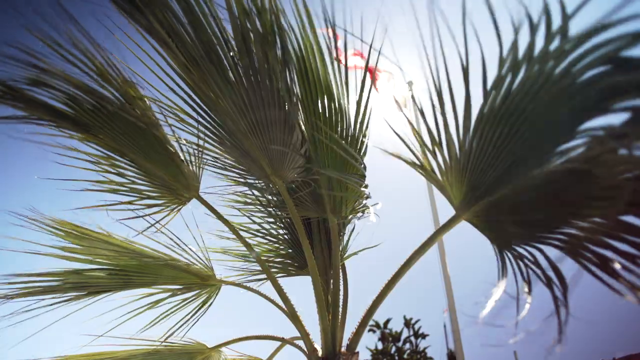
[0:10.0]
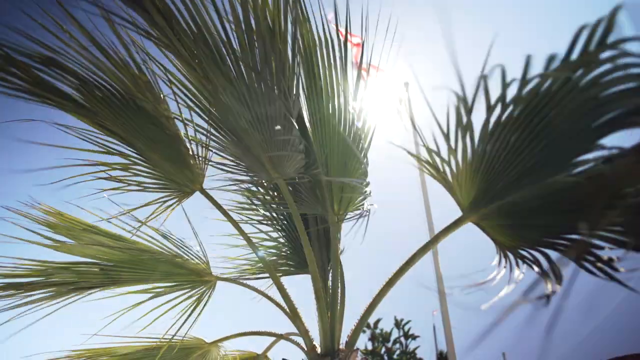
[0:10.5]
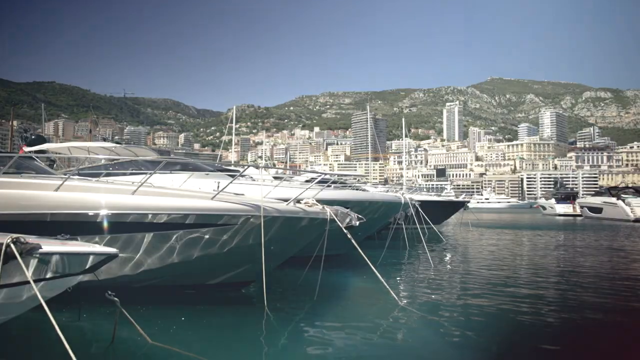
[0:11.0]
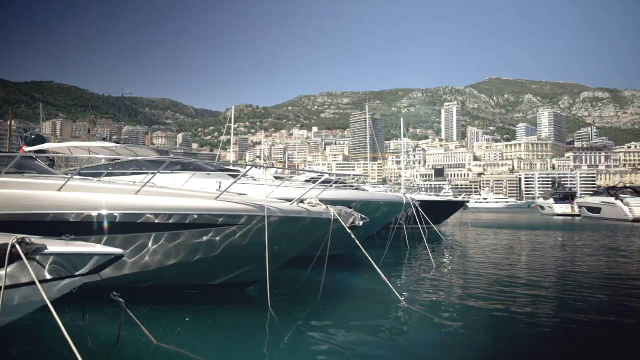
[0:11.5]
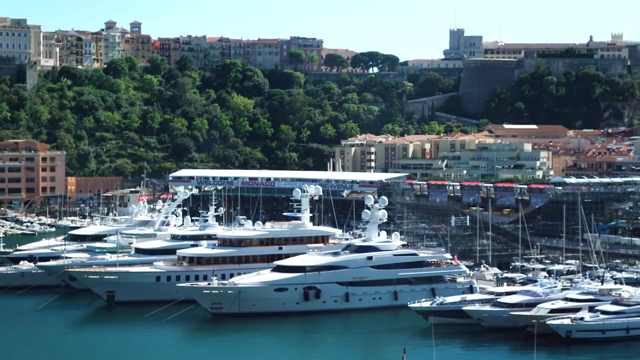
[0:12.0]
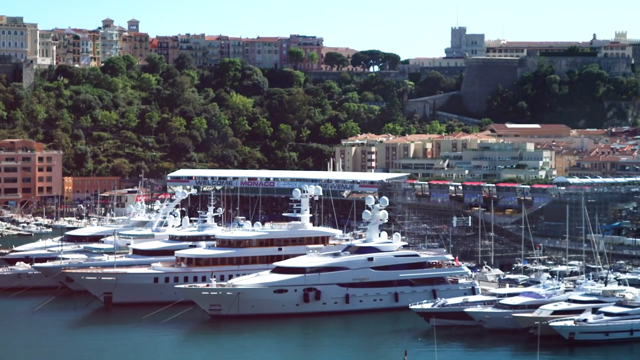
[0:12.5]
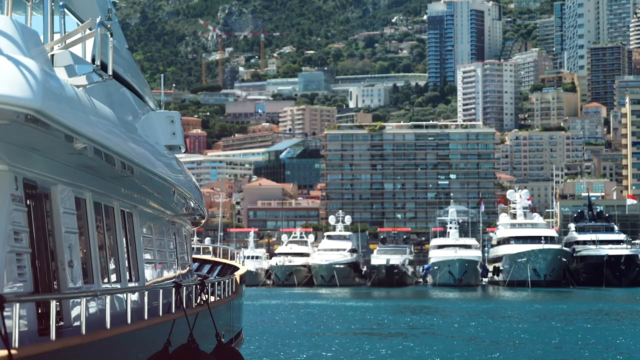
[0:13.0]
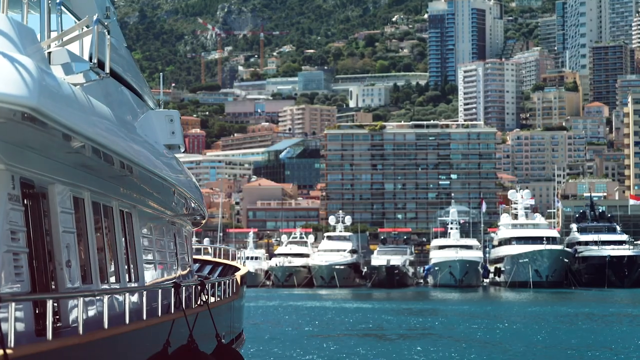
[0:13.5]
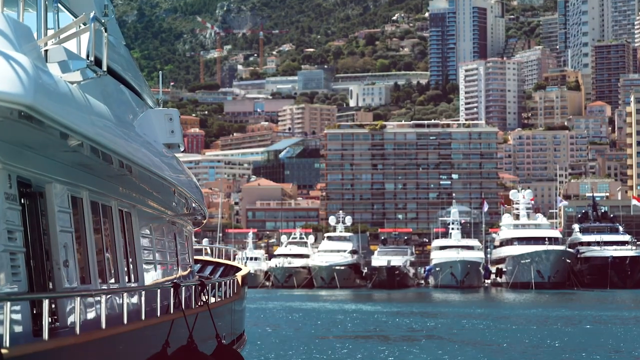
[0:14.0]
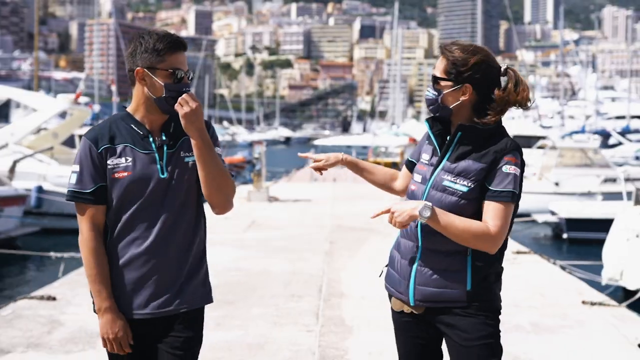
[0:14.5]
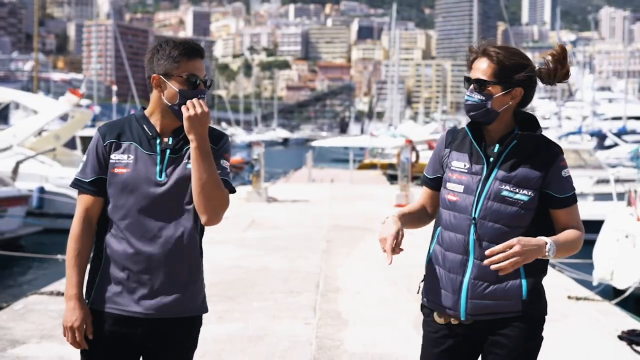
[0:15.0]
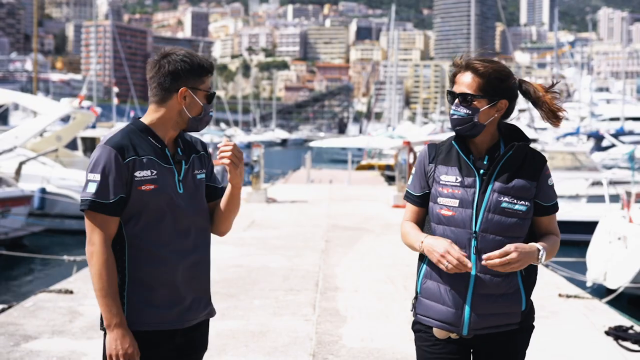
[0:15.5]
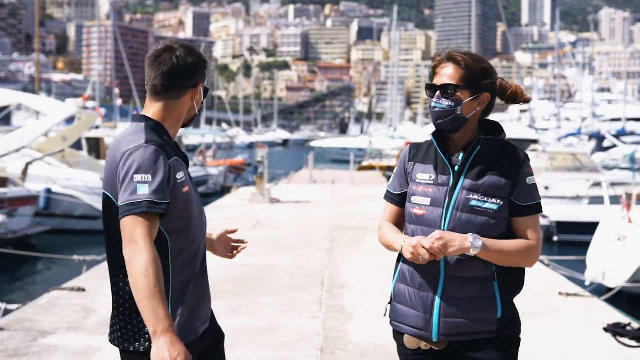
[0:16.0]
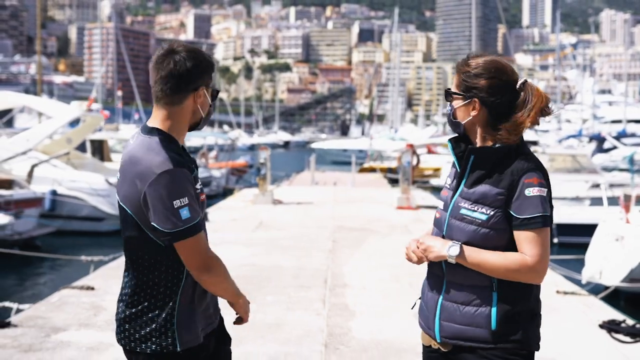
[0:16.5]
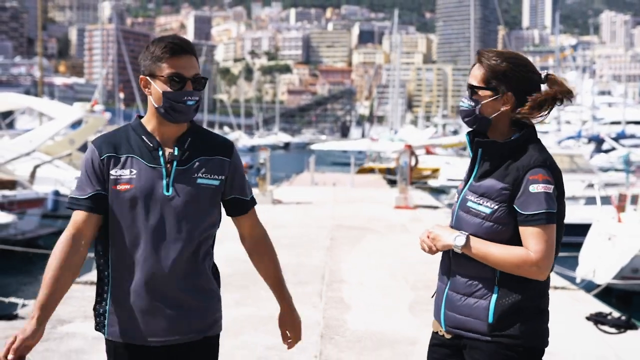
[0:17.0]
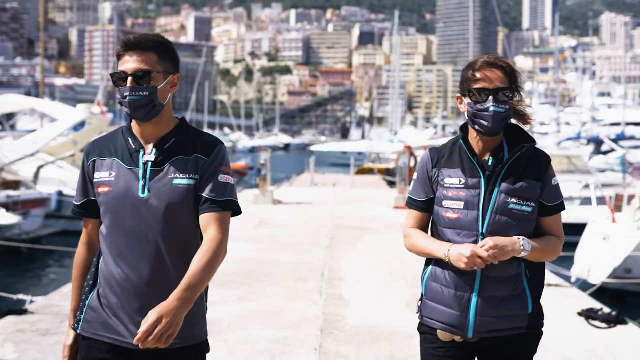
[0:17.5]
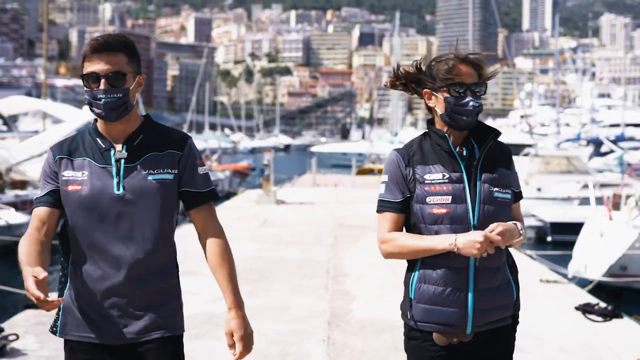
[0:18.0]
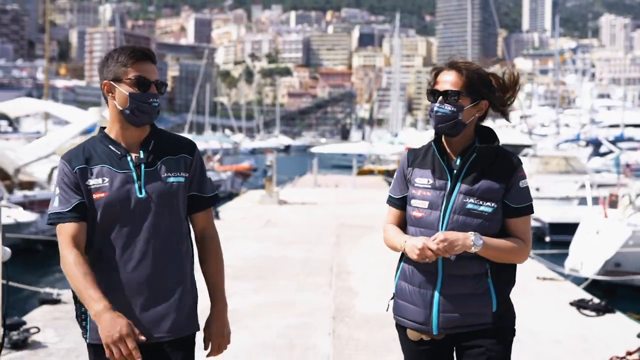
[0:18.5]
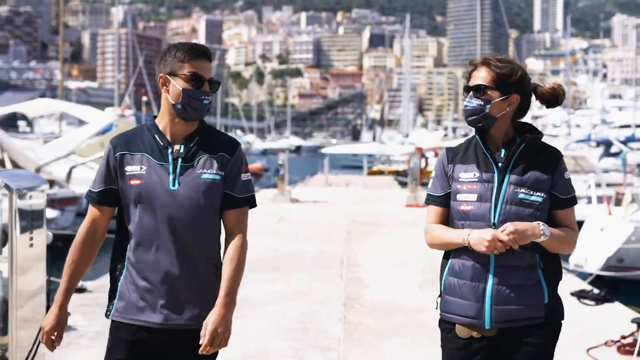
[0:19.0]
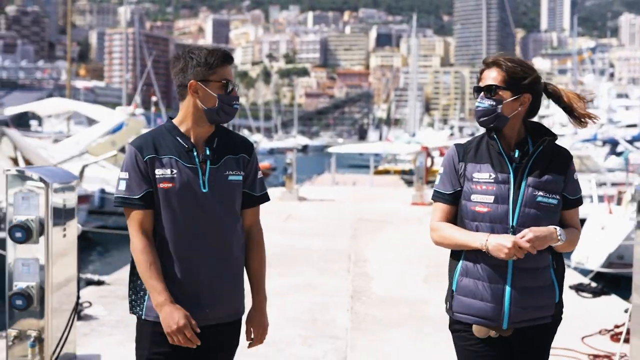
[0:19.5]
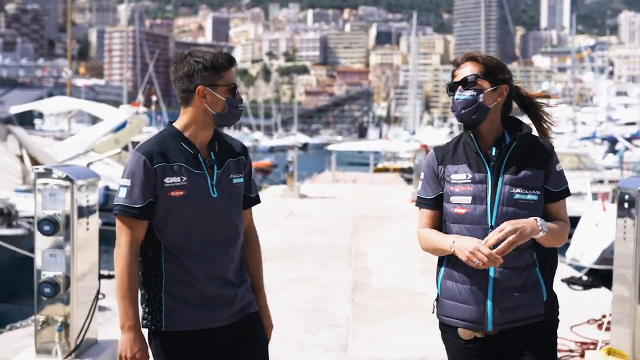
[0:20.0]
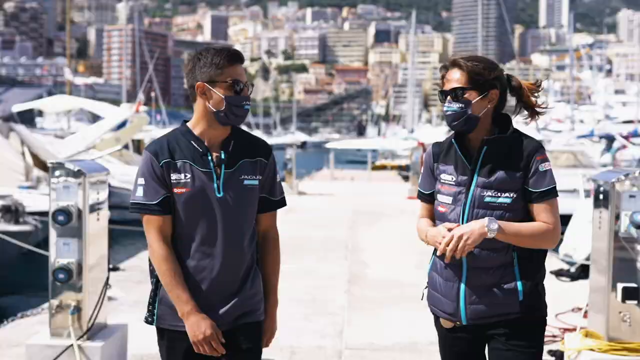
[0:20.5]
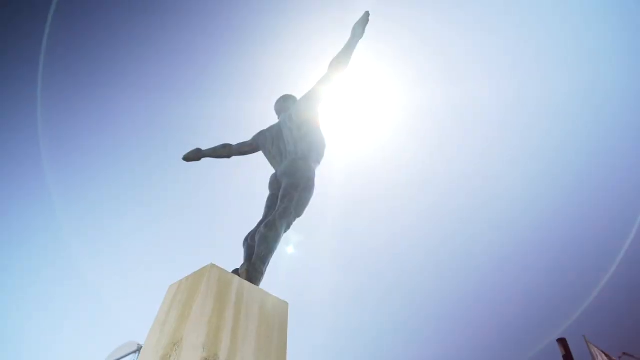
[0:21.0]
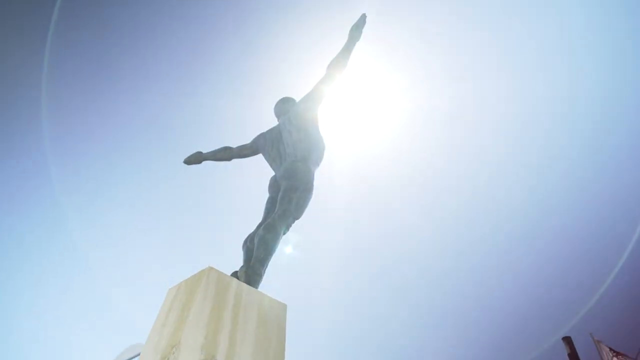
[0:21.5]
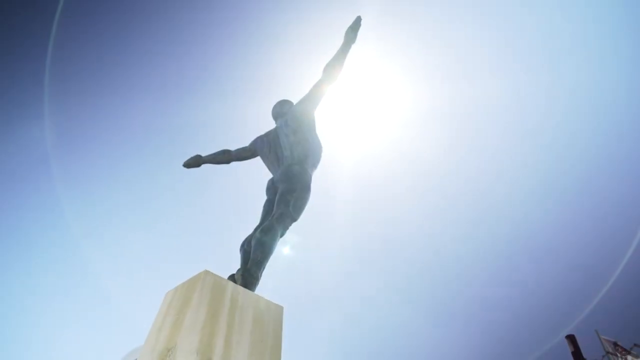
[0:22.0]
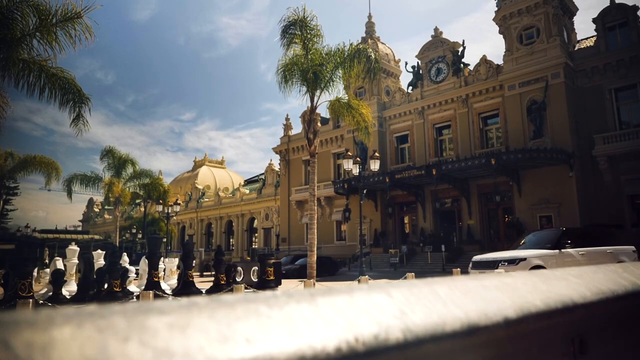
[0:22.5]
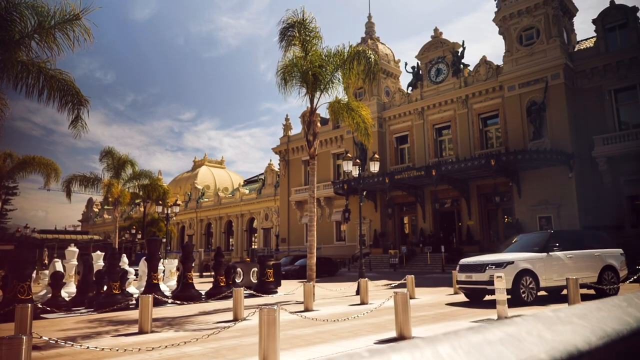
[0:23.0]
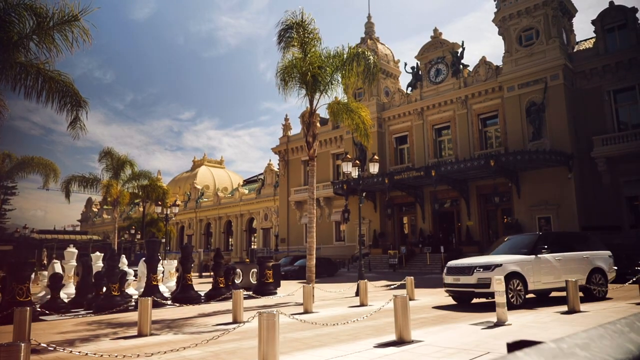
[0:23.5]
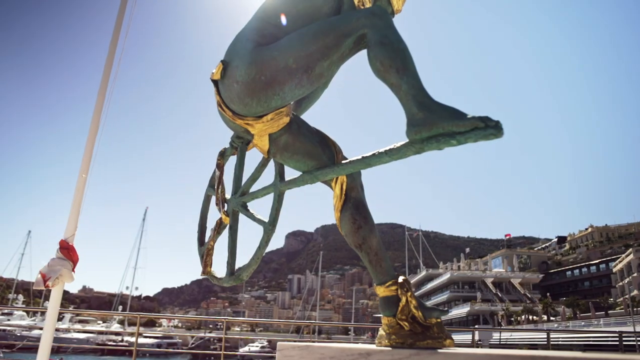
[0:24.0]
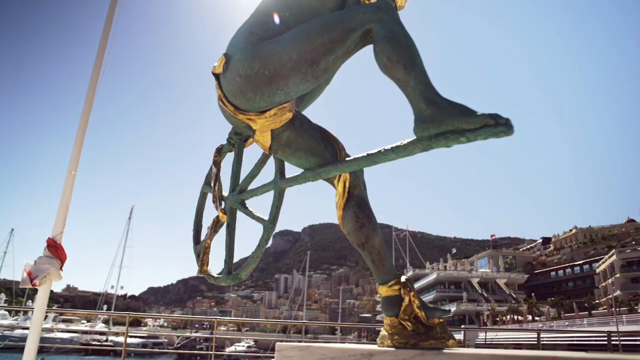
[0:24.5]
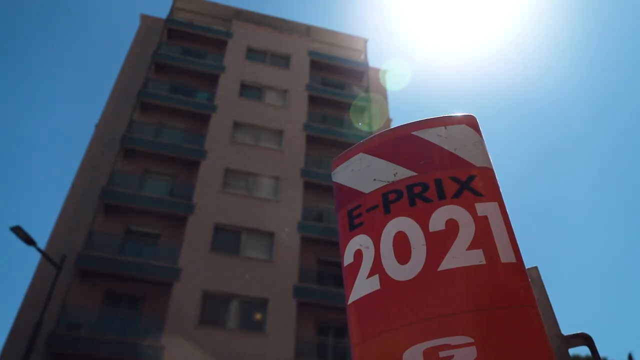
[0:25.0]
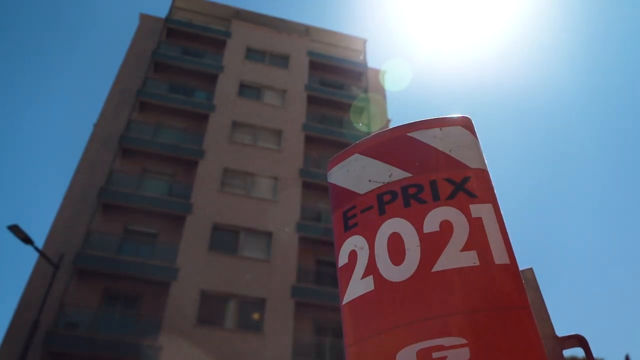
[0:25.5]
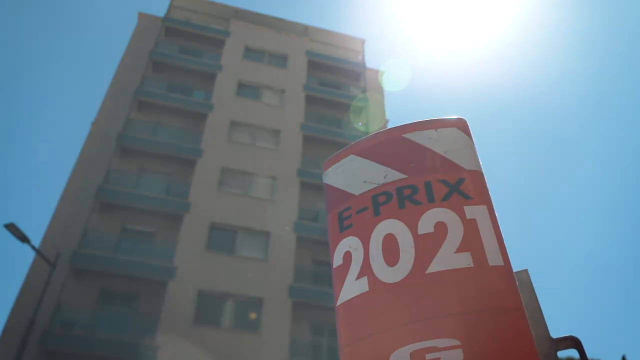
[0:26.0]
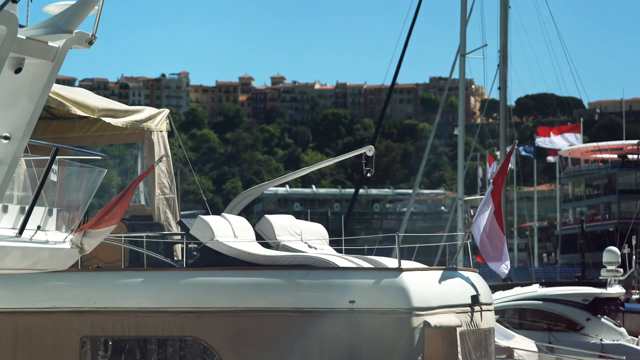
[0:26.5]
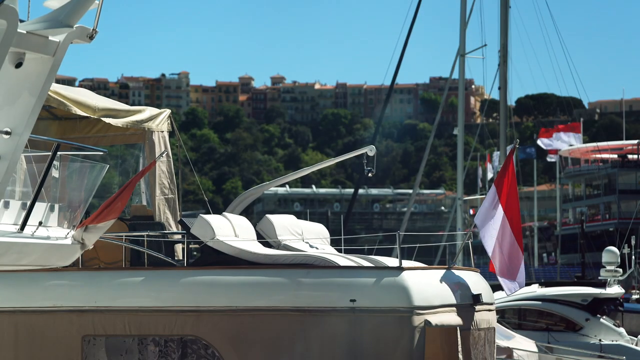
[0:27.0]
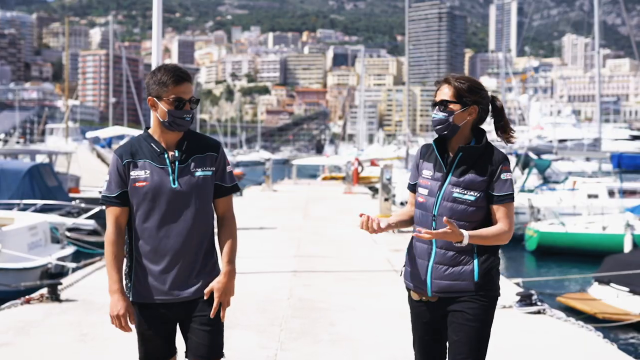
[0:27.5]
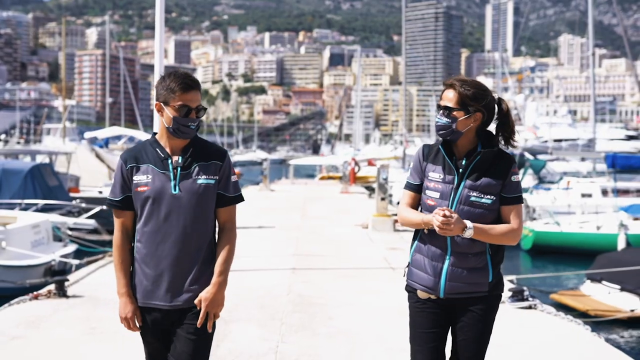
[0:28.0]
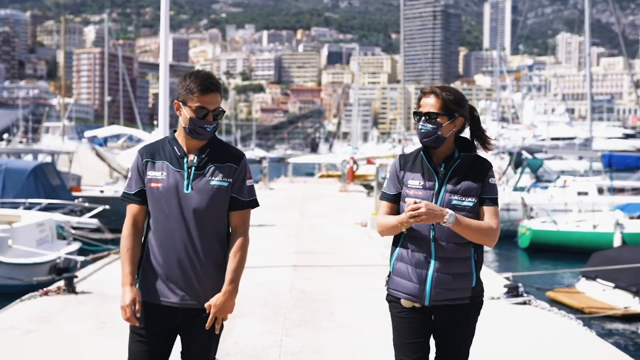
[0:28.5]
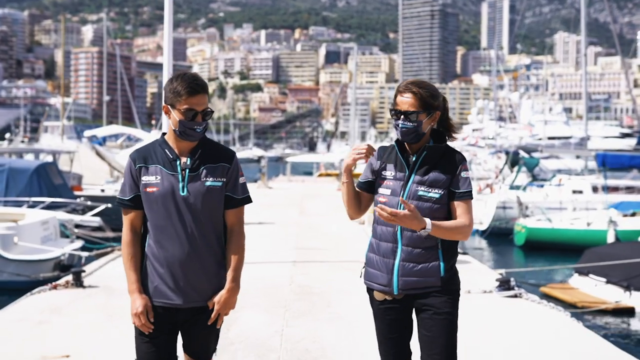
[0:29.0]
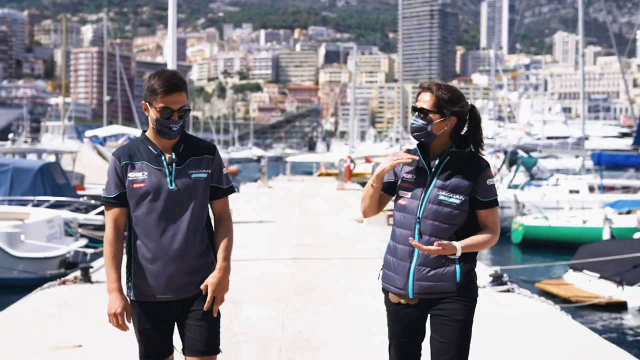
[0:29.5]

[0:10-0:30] Many different ships are on a body of water, aligned in a very meticulous fashion around a dock. A man and a woman talk to each other, and in the background there is a very fancy building with the text "E3 2021". Buildings of various heights are in the background. It is very sunny, and an American flag and flagpole are at the location. The waters surrounding the dock hold many ships in an unusual orientation. The video transitions quickly through several scenes of different yachts flying the Monaco flag, which is yellow and red in two stripes.